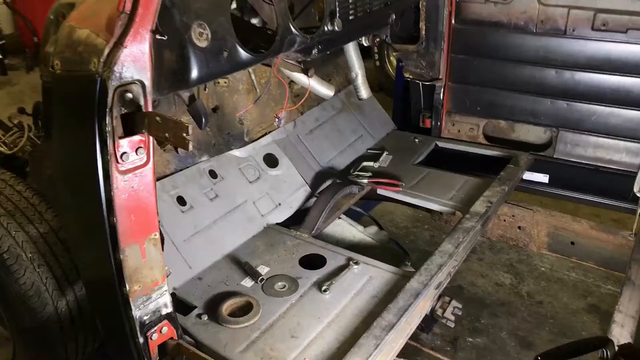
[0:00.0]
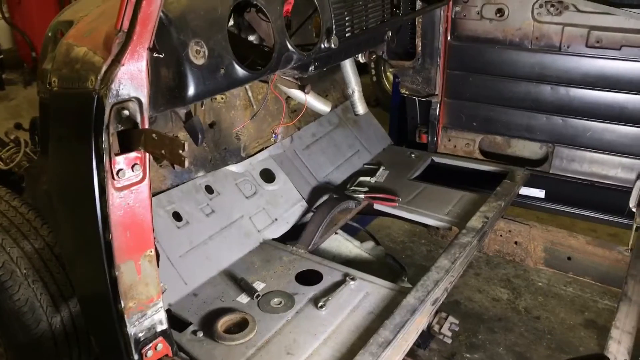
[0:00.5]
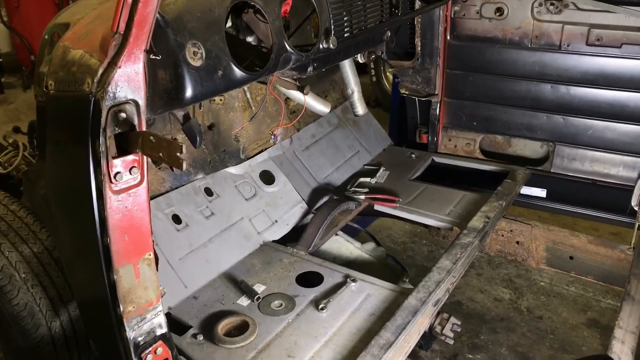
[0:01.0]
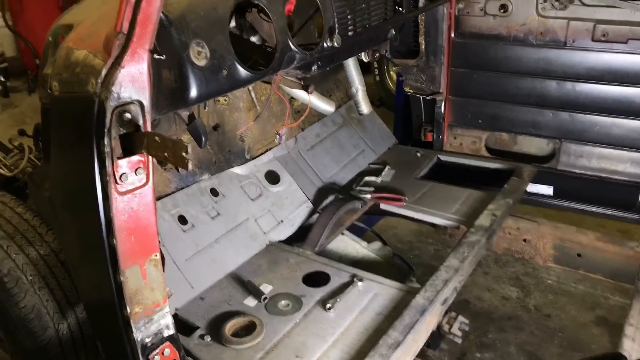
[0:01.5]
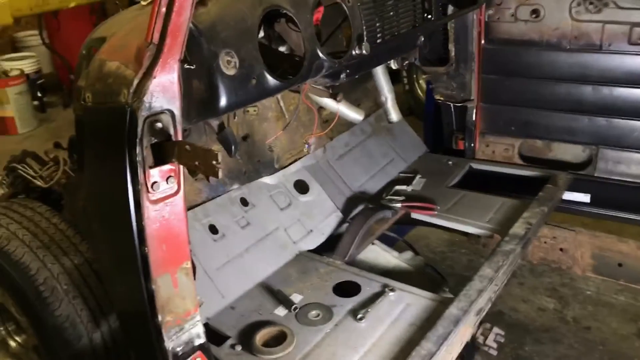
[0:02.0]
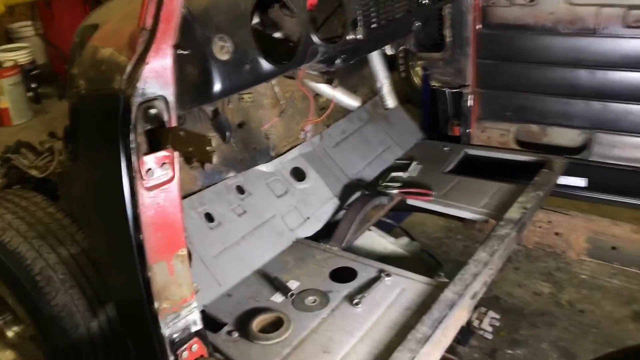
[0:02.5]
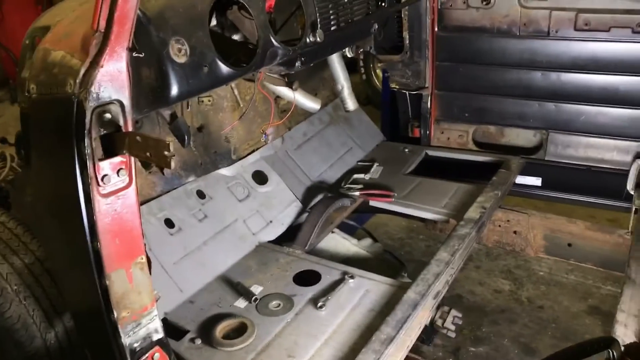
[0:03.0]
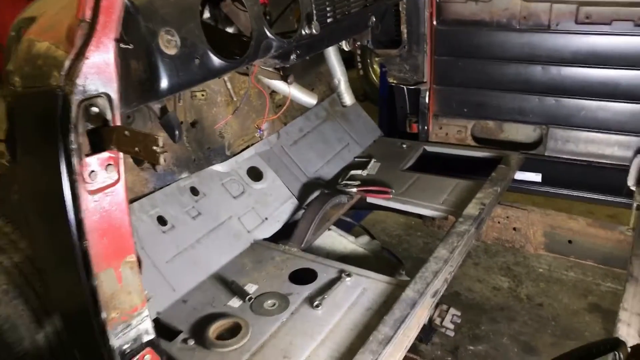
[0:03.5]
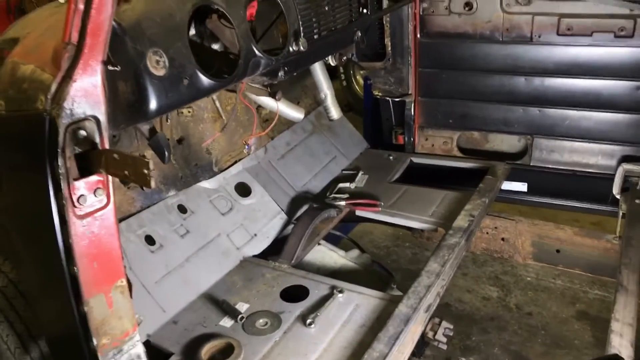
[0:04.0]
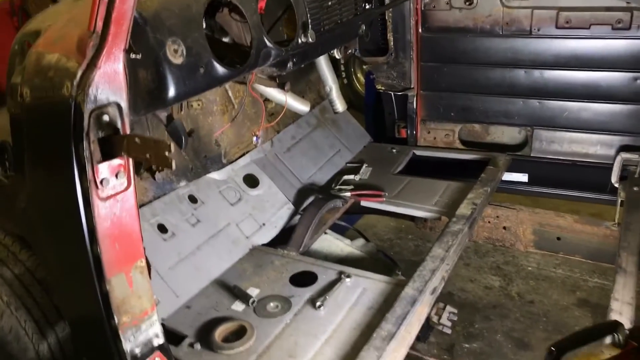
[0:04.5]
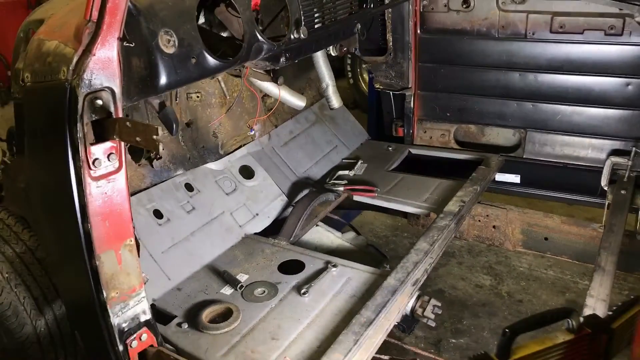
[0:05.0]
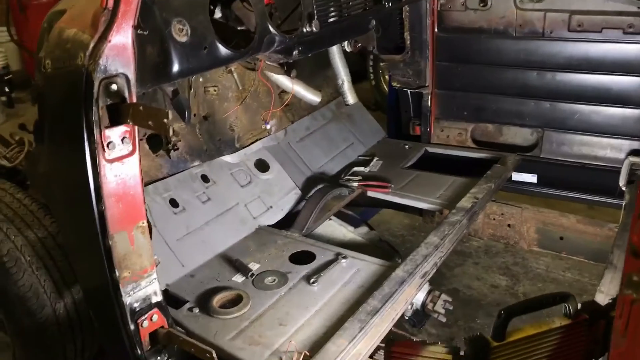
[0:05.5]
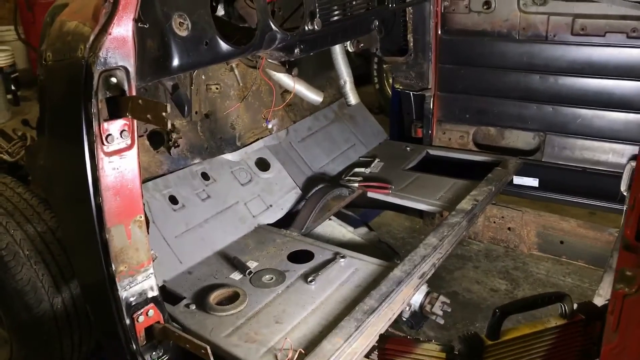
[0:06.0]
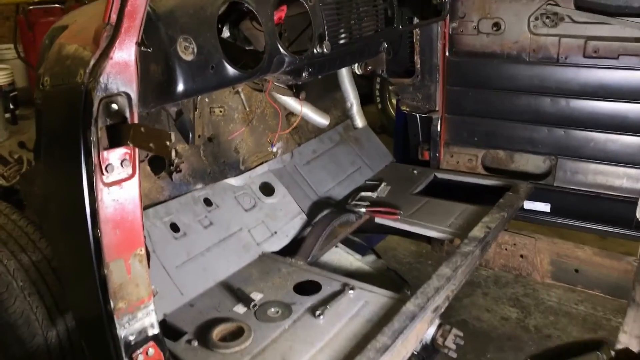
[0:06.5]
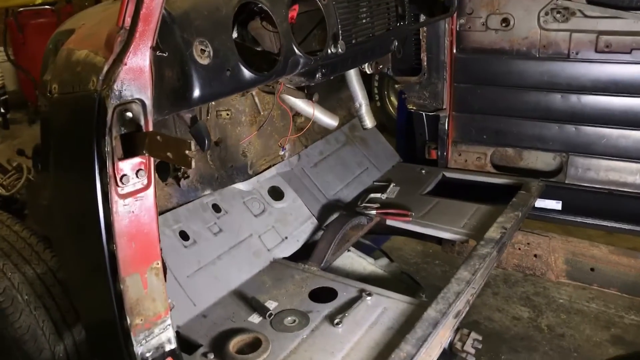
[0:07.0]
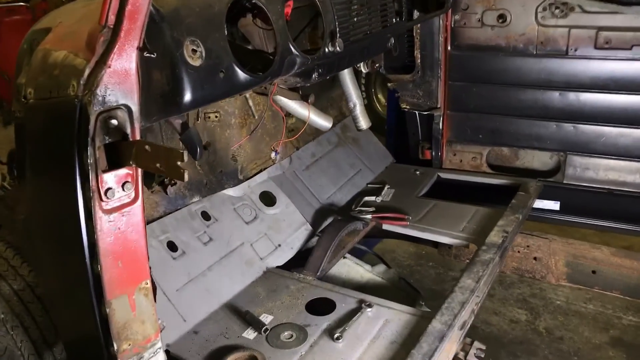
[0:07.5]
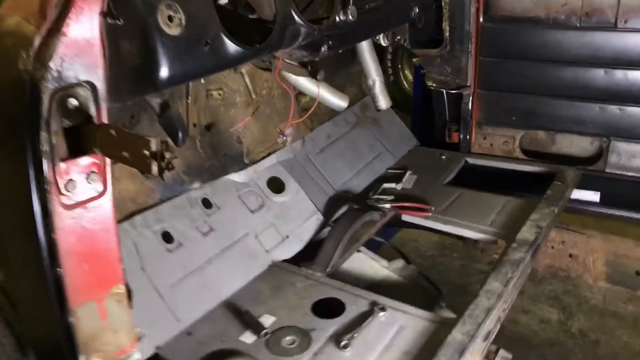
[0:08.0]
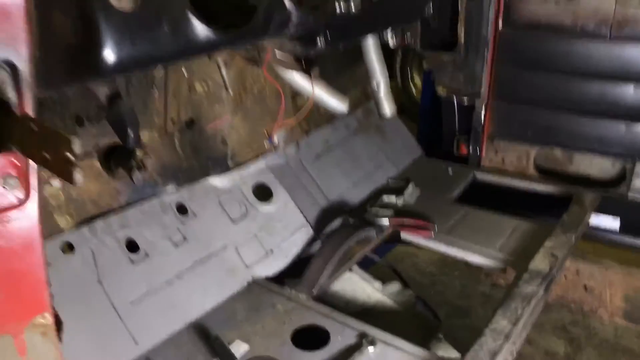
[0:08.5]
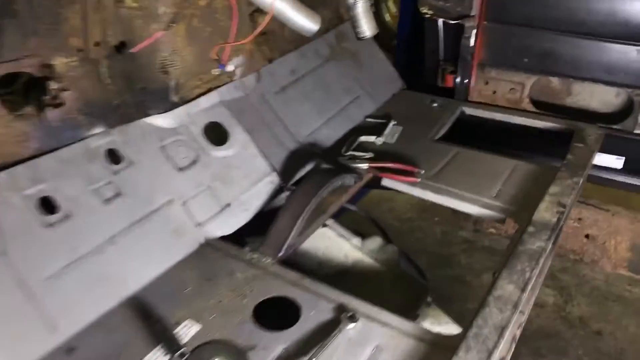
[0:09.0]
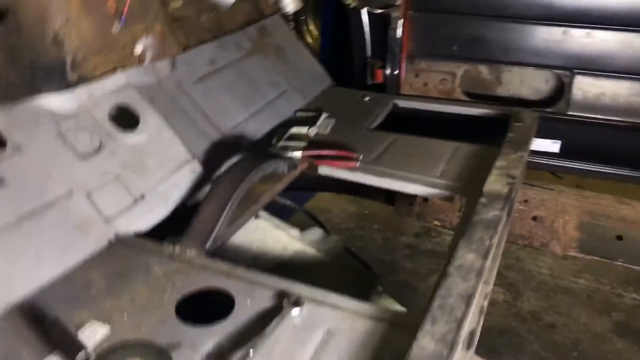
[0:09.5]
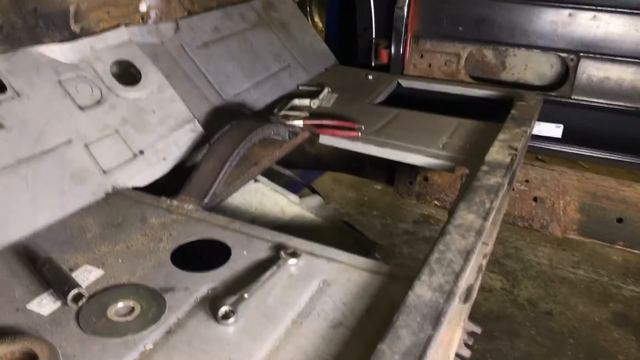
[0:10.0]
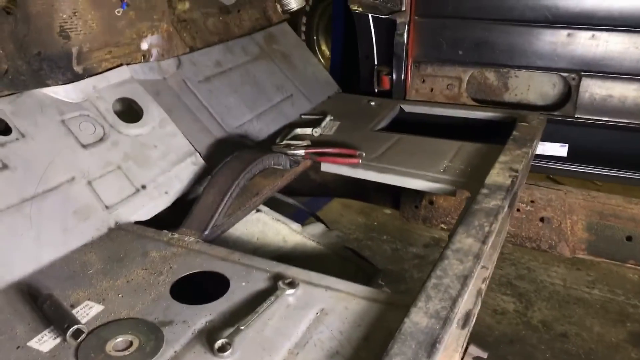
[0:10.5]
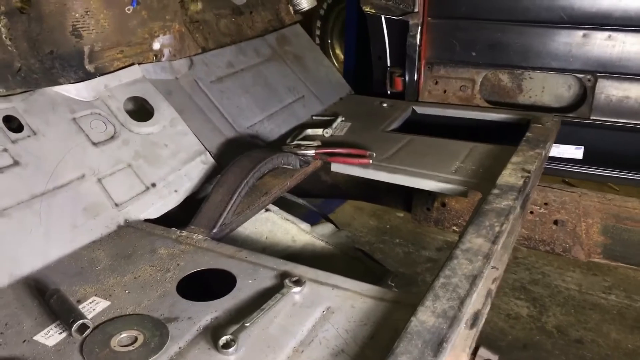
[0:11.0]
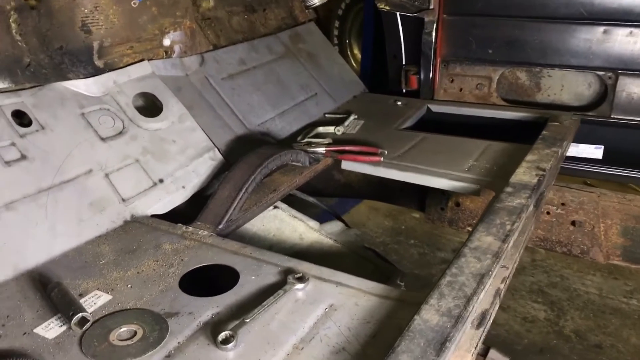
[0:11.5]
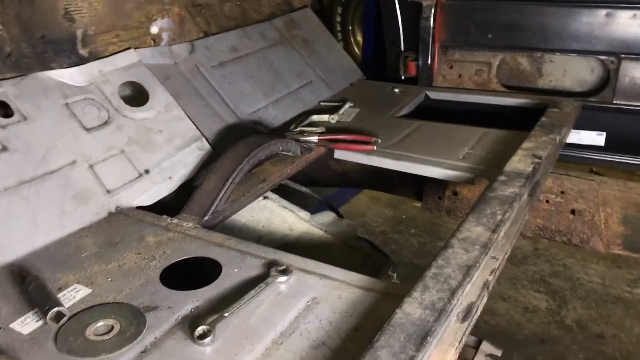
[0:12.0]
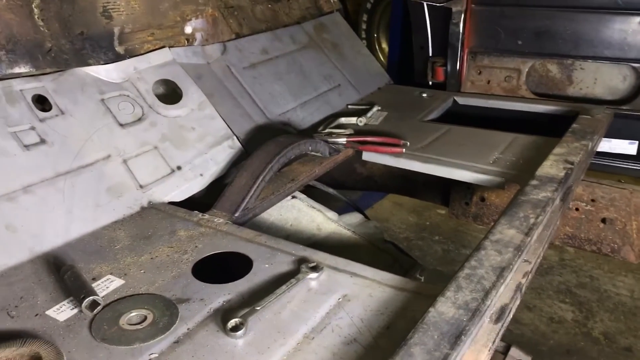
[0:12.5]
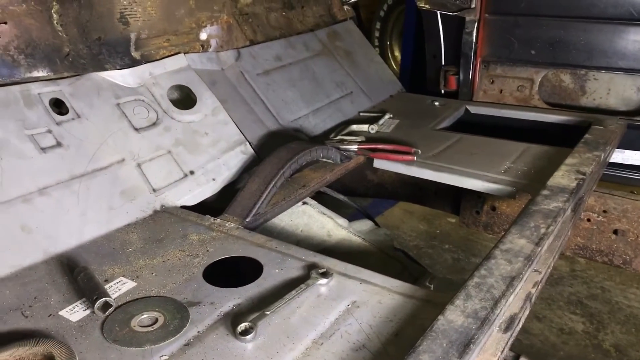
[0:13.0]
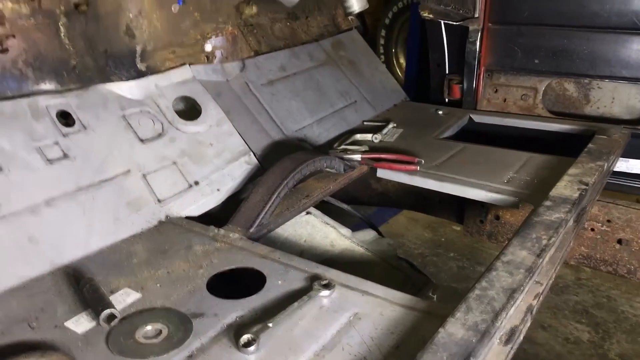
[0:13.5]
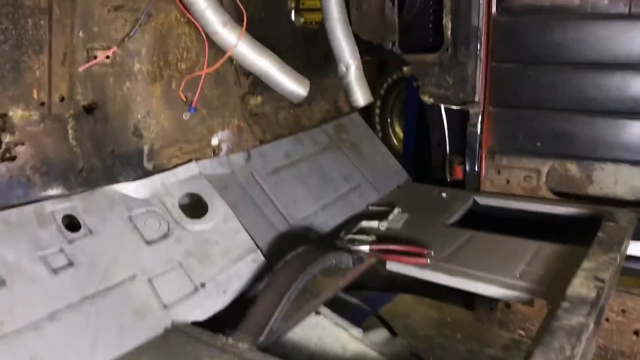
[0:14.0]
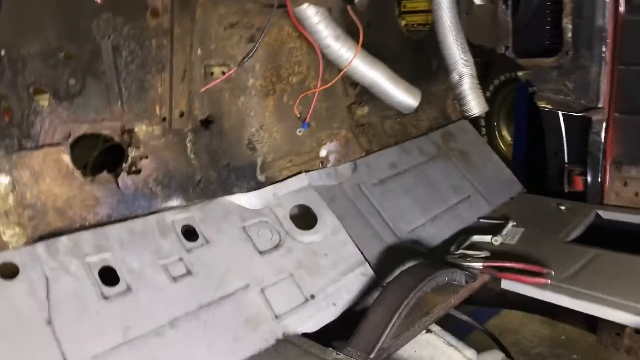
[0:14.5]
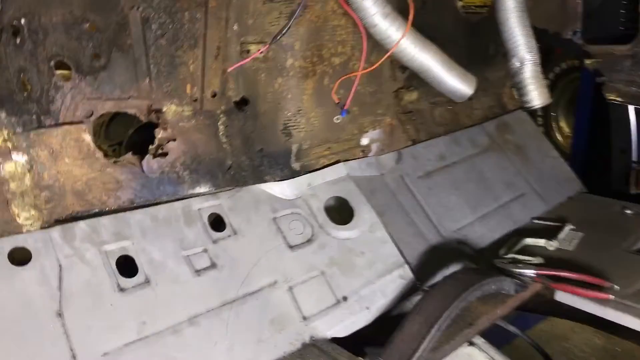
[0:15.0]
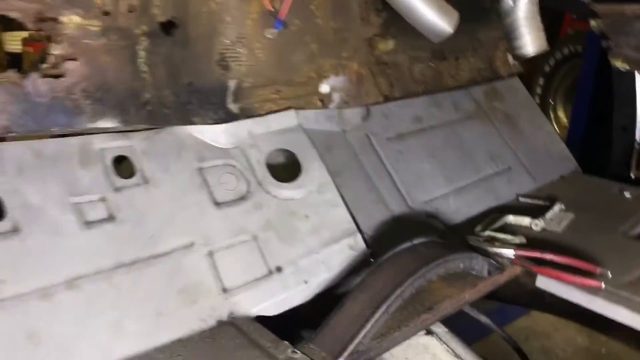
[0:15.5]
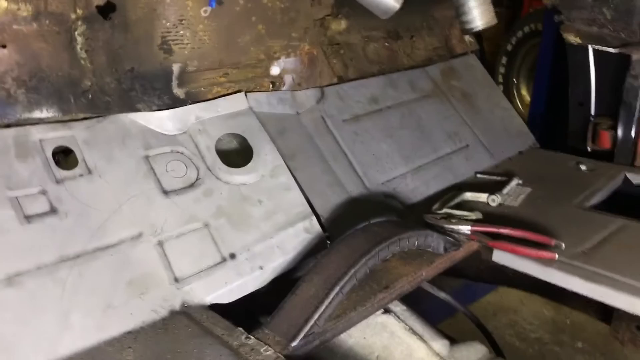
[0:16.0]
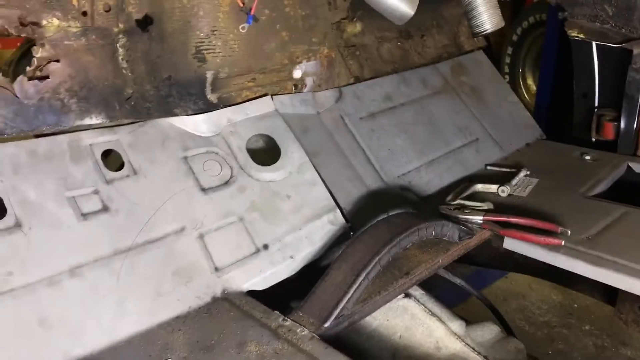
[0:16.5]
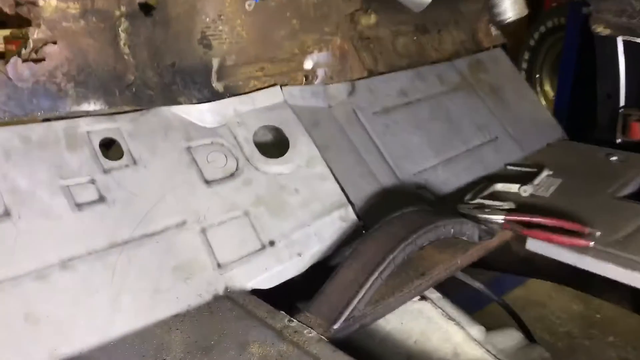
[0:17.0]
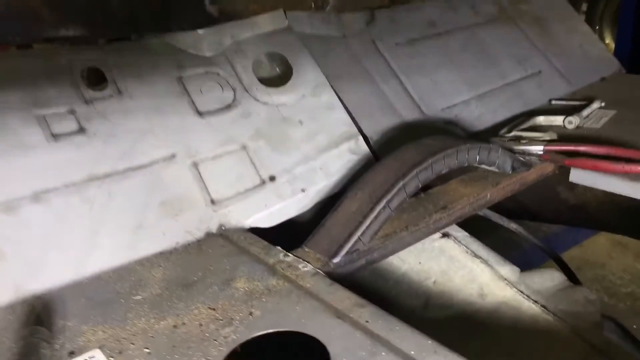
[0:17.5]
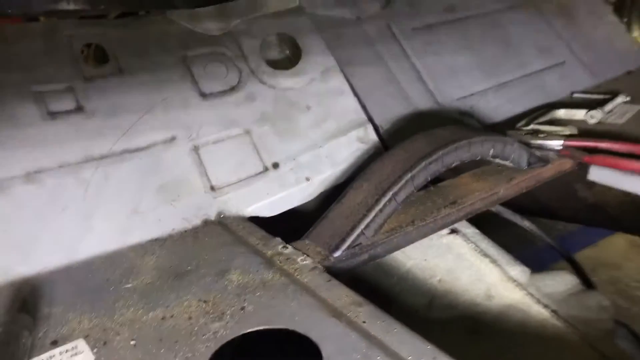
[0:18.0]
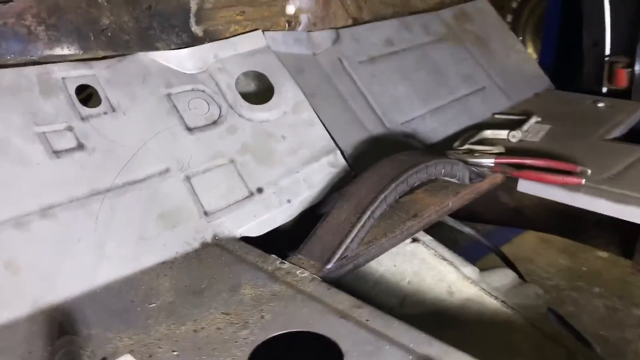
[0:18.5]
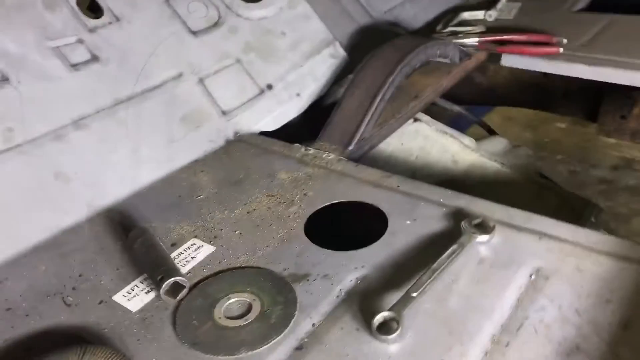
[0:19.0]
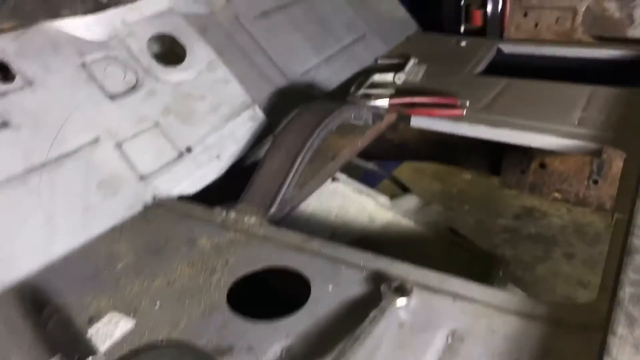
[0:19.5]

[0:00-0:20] A vehicle that has been torn down and apart looks like it was red at one time. One tire is visible in the bottom left corner, and the view appears to look toward the dash area. There are rusted-out and corroded parts, with holes in part of it. Some of the floor looks like it has possibly been replaced, apparently as part of a rebuild. The door on the closest side looks completely missing, while the door on the far side looks shut. The camera zooms in to the under-dash area, where several wires hang down, along with a lever of some sort and pipes. The camera then zooms in to the floorboard area, where a few tools are sitting around.